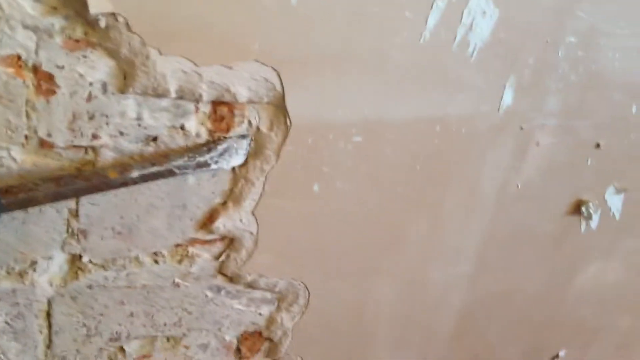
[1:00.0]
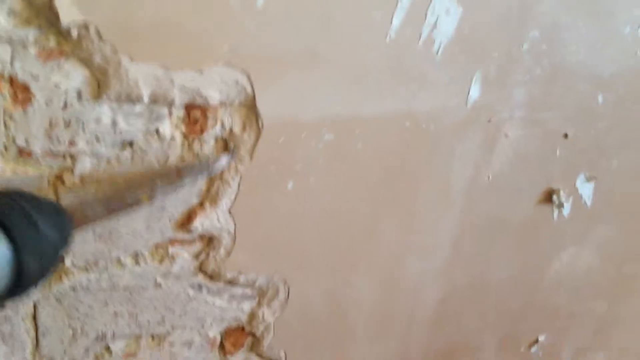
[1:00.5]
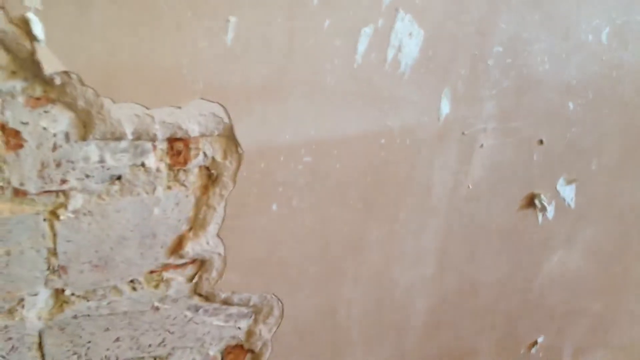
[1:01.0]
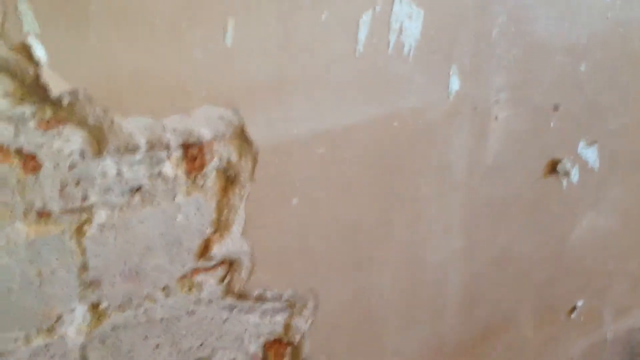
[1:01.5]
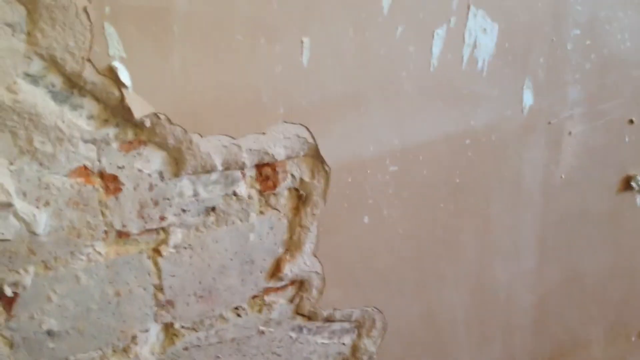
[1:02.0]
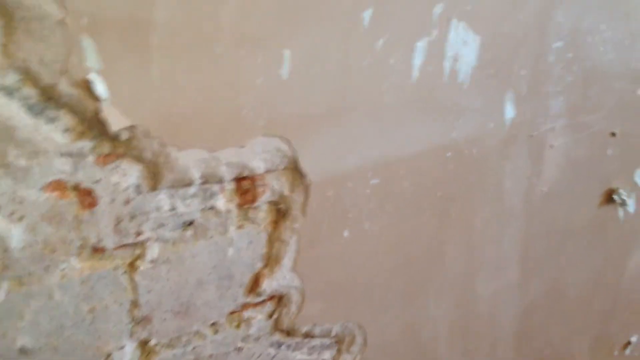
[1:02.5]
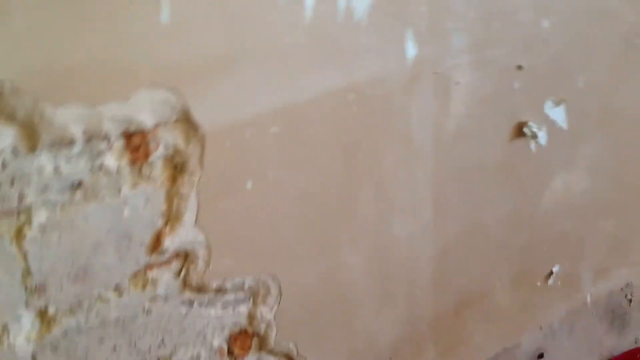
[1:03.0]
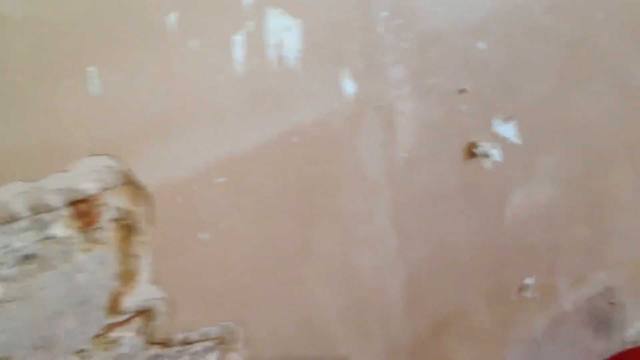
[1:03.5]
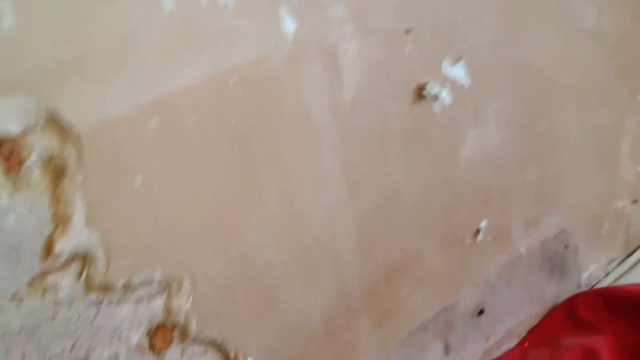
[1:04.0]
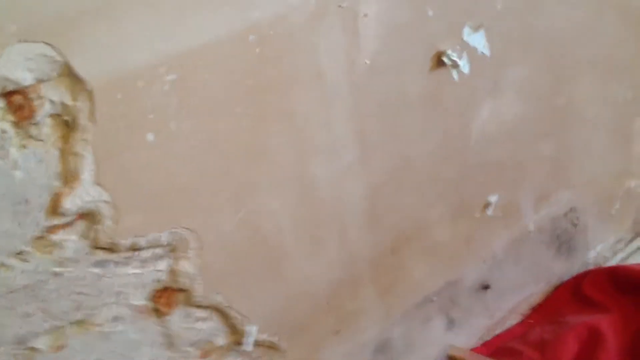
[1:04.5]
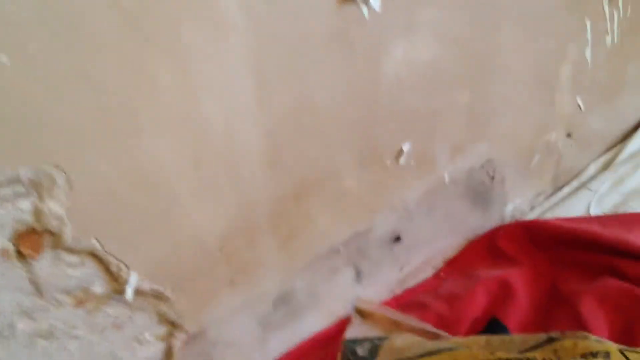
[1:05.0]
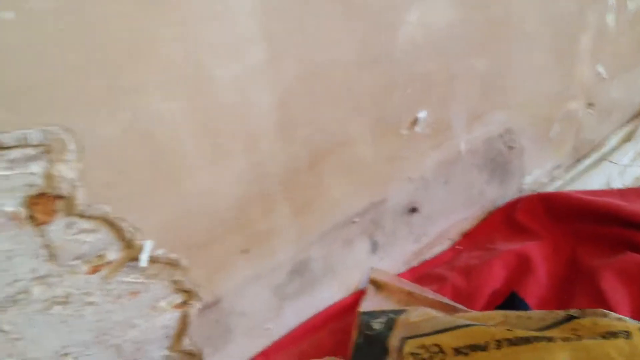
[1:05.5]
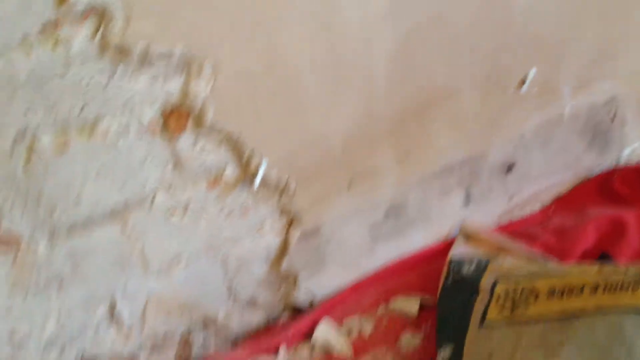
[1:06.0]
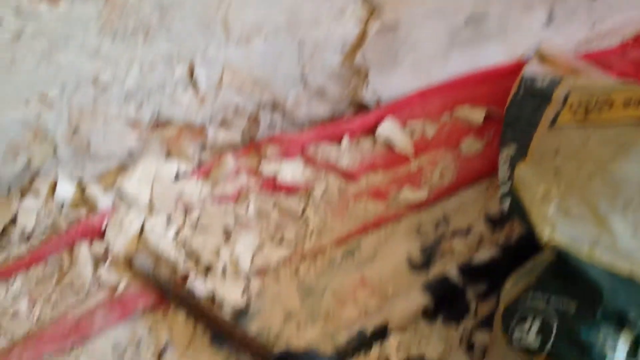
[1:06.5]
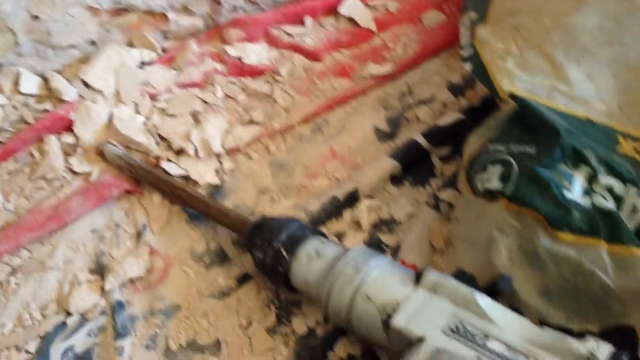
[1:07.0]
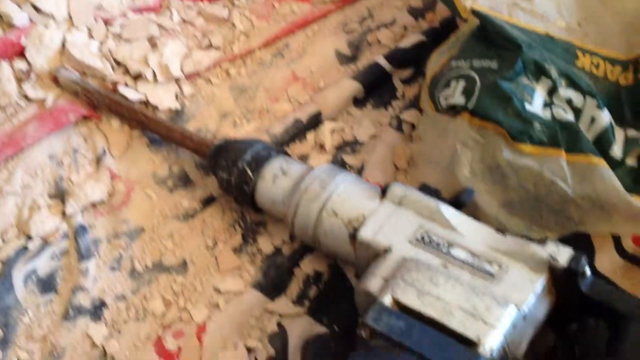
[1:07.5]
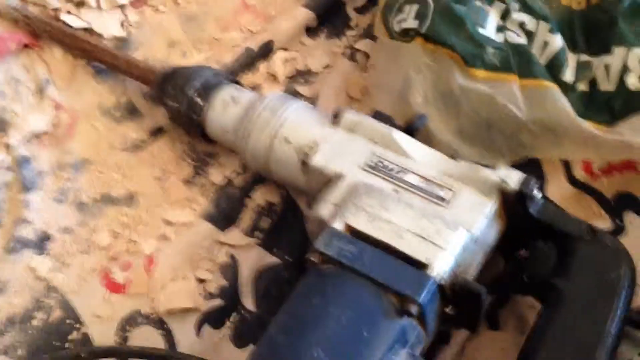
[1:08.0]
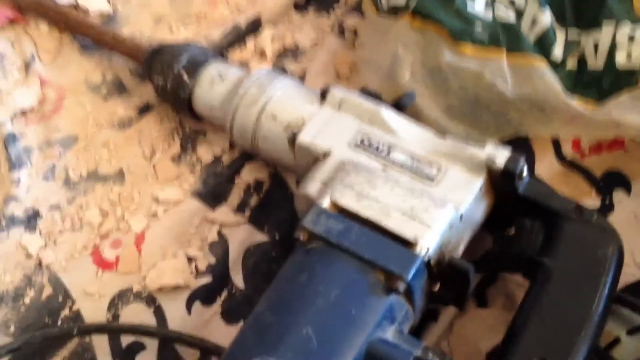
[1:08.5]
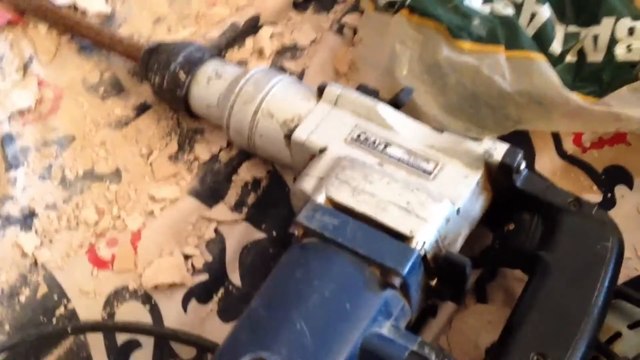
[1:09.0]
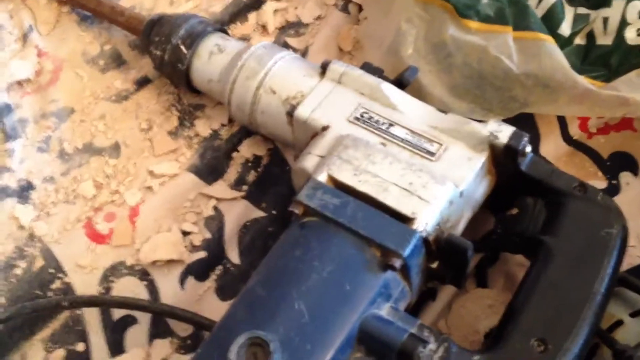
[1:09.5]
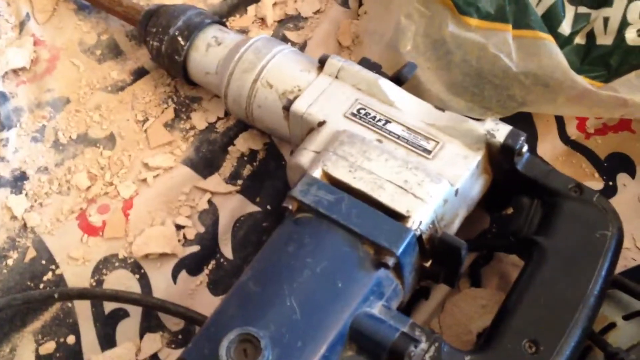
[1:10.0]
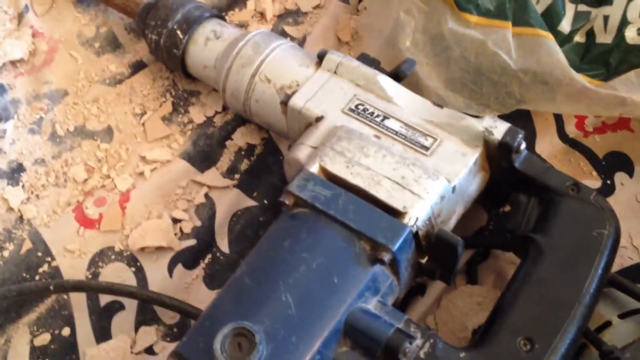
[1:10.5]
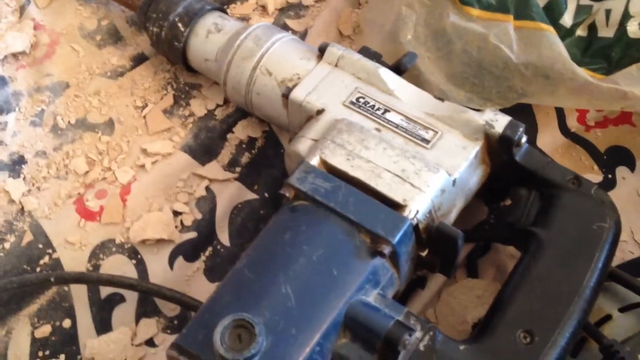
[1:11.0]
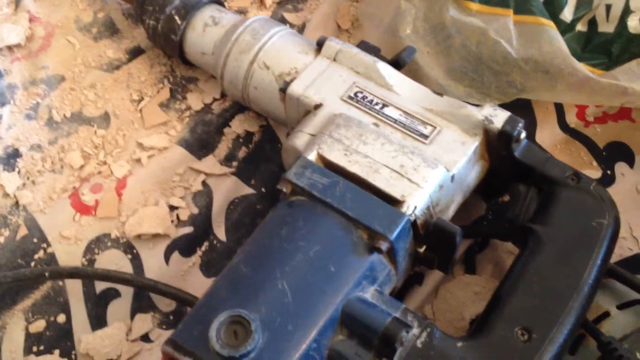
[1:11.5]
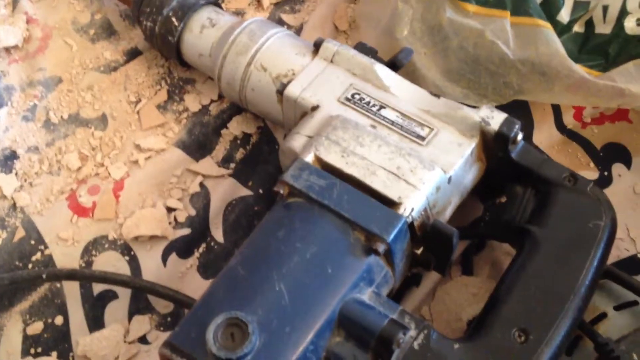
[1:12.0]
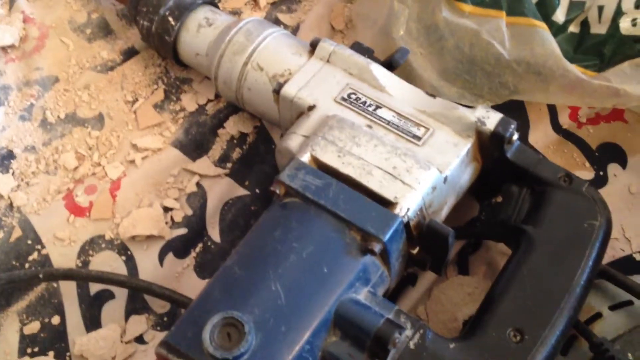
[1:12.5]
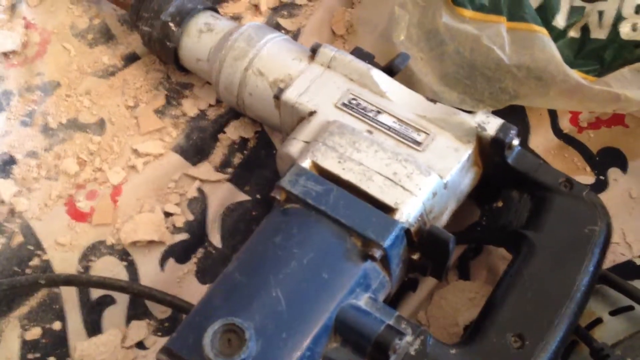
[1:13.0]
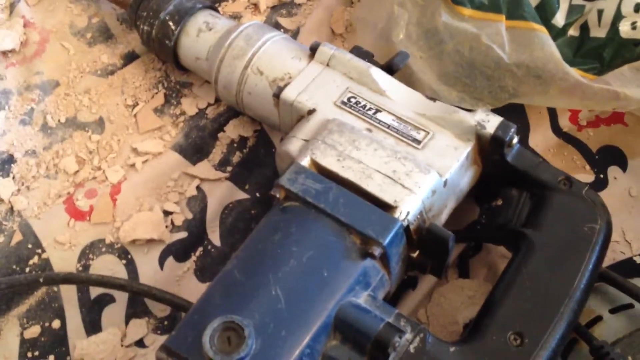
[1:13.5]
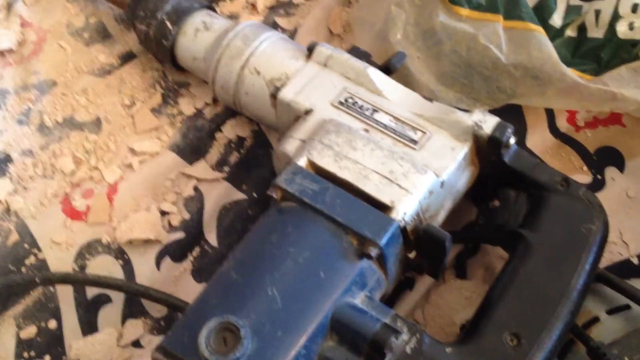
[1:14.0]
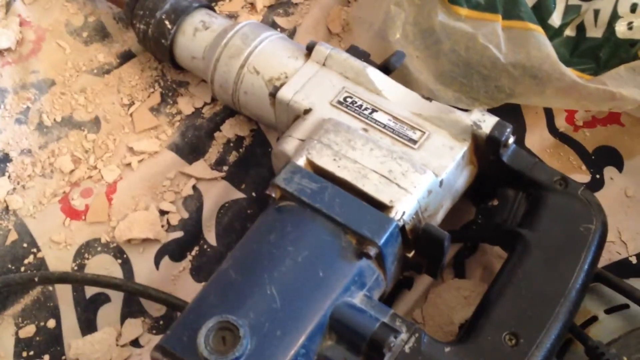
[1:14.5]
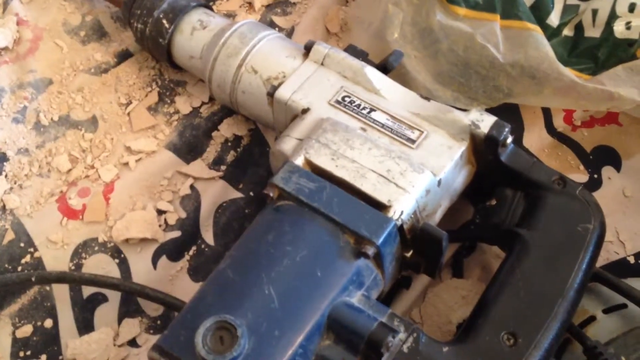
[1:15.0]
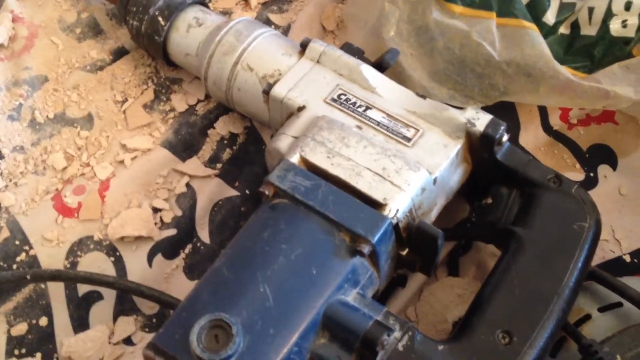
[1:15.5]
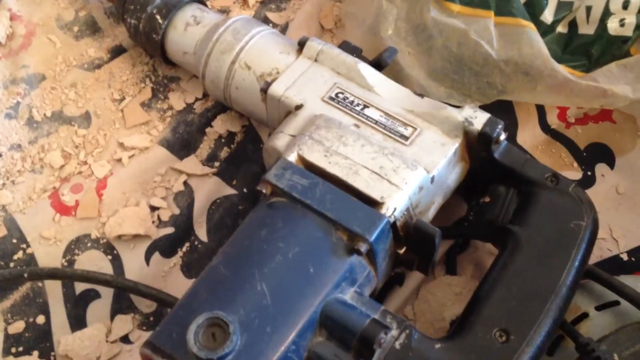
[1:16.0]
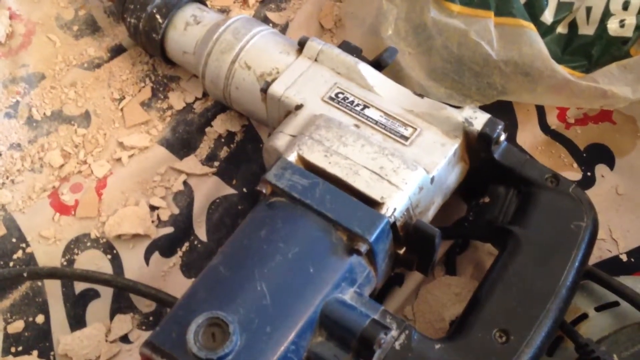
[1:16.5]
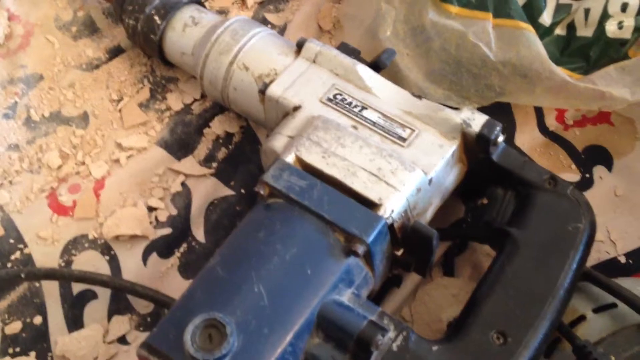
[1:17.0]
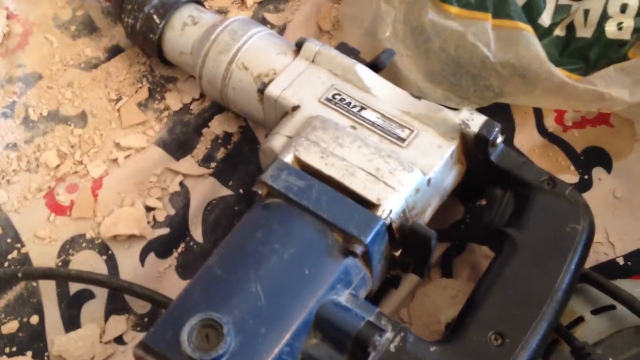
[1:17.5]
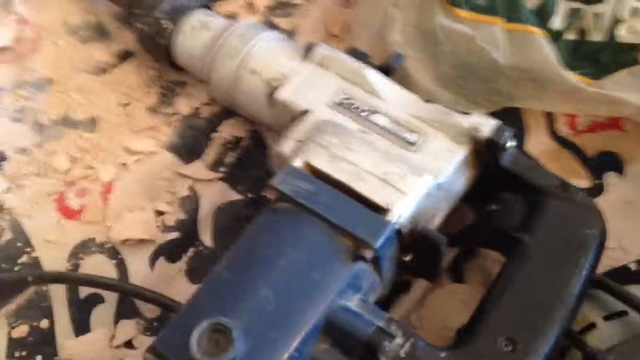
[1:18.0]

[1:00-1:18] The drill continues to be operated perpendicular to the wall and slightly parallel to the face of the wall to chip off the wall coating. The drill appears from the left side of the screen before being tilted away from the wall and removed. The camera continues to move around, panning and showing parts of the wall and the ground. The drill is then visible on the ground, with a silver and black design and a large, long, flat, thick silver tip. A black cable is visible underneath the drill, and the video stabilizes, showing the drill angled toward the top left corner of the screen as the video ends. It appears to be a construction video showing the demolition of a wall or the removal of plaster, wallpaper and drywall covering from a brick or concrete wall. No text is visible on the screen.